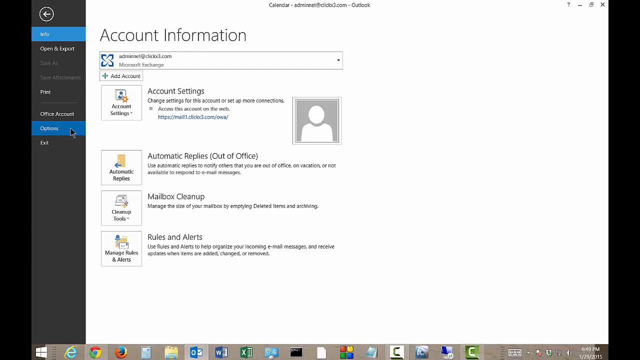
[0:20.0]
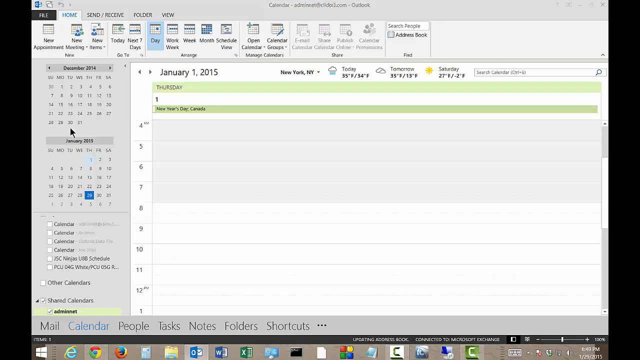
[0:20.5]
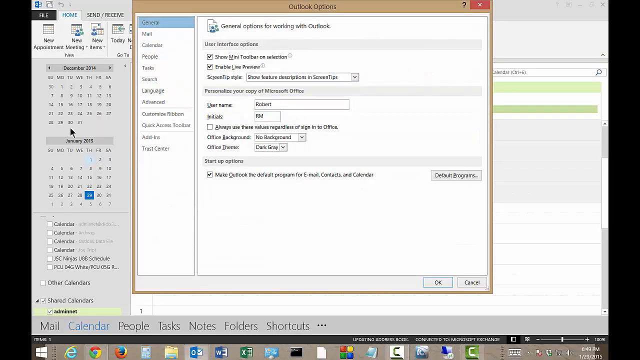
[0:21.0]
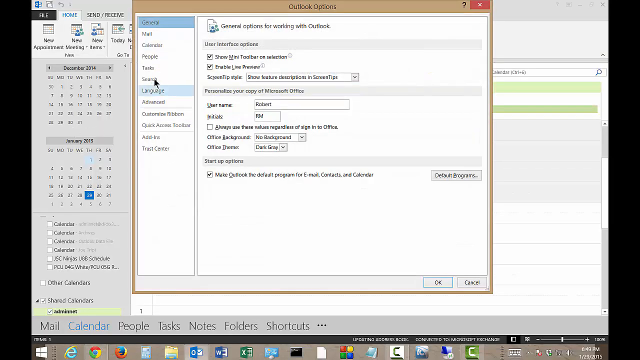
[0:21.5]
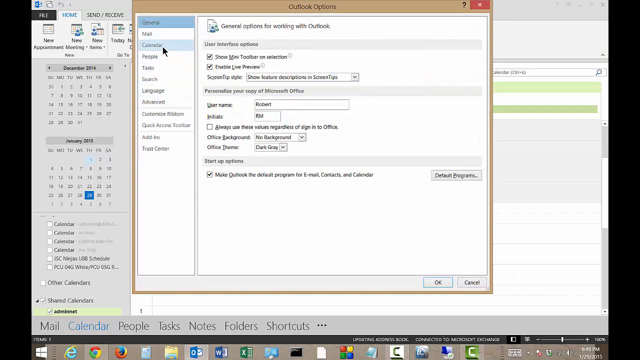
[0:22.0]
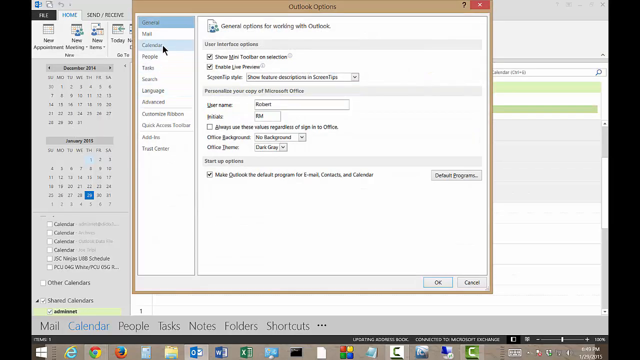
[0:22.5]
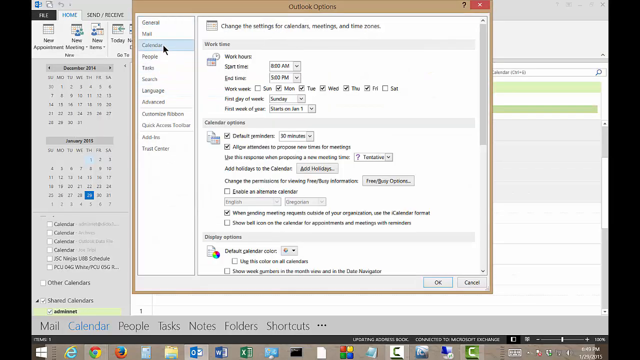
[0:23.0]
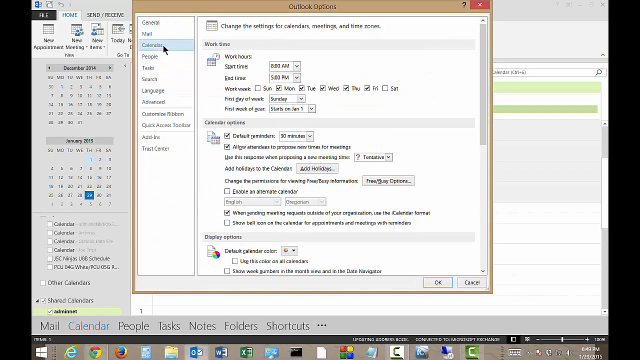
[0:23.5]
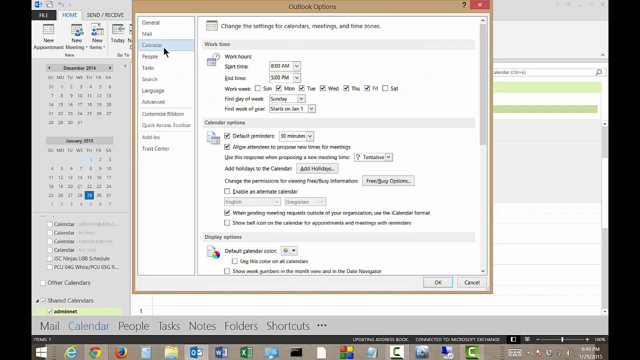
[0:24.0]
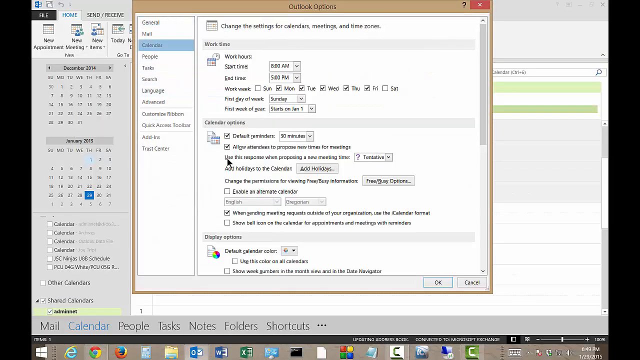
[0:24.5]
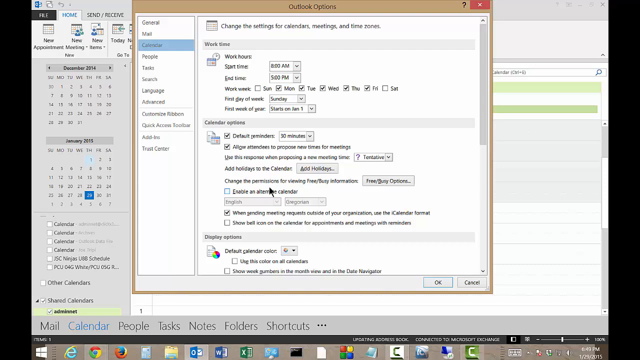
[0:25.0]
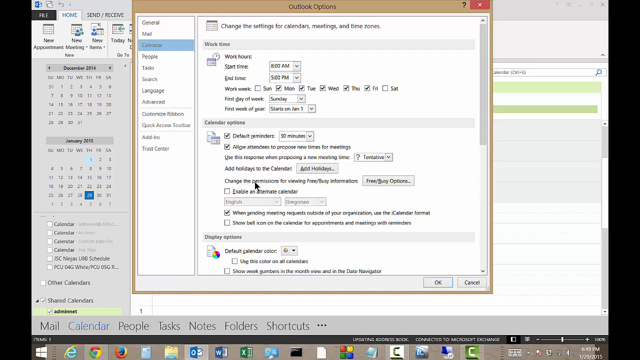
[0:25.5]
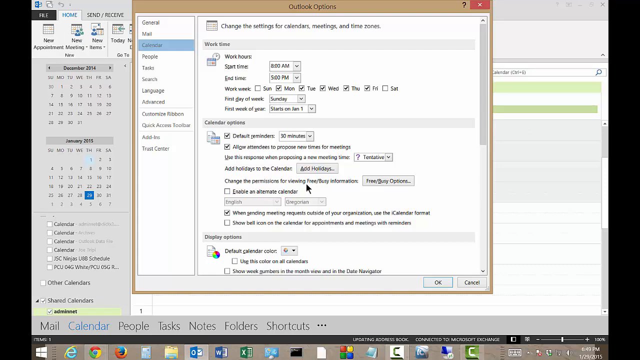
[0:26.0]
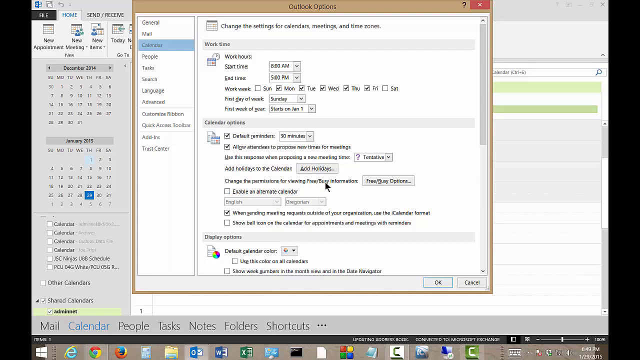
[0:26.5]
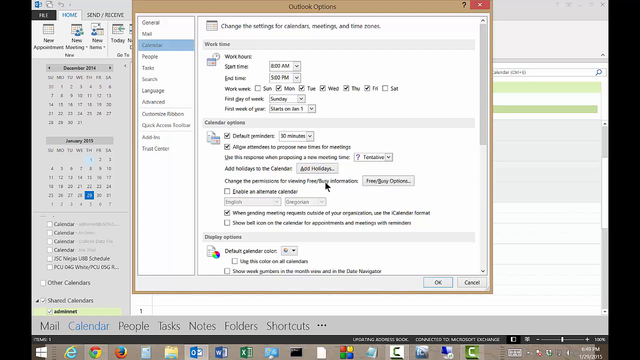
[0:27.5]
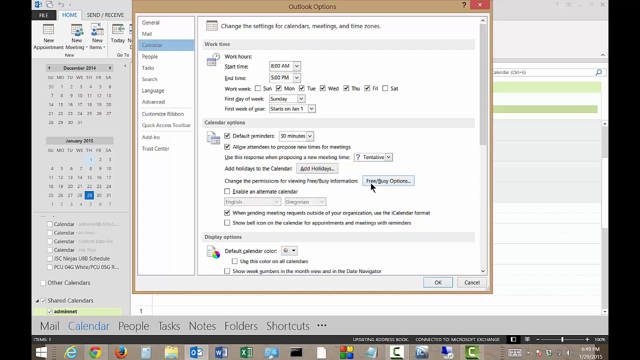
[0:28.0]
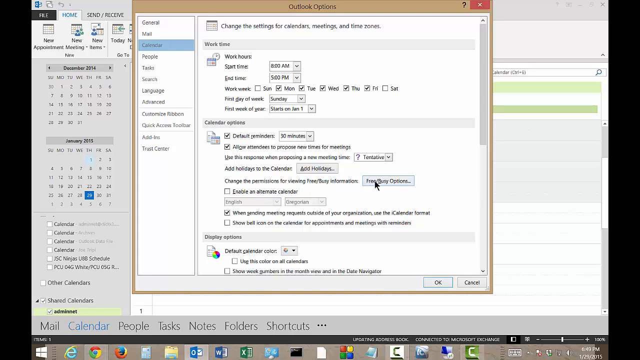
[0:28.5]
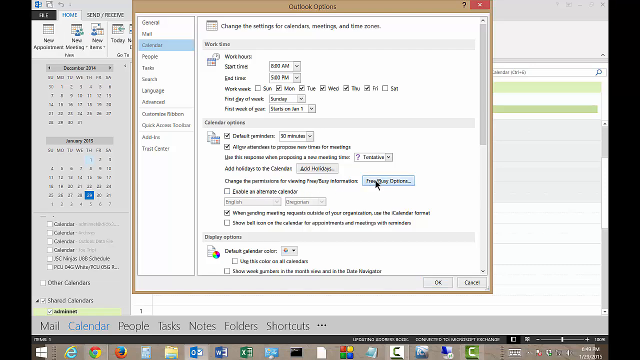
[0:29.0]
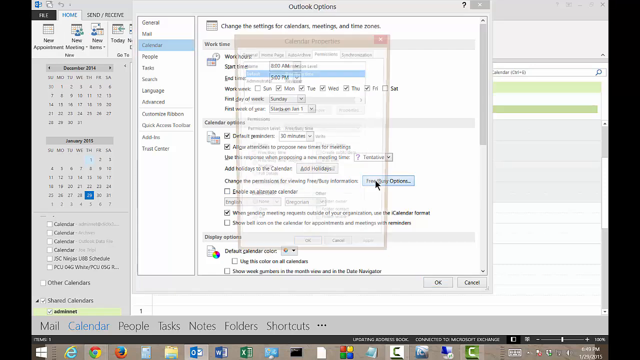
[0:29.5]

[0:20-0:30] After the selection from the file tab, another window opens, titled "Outlook". Down its left side are several options, including general, mail, calendar, people, tasks, search, customized ribbon, quick access toolbar, add-ons and trust center. The user selects calendar and goes directly to a button reading "change permissions for viewing"; the rest of the screen is not visible due to pixelation and lack of focus. Clicking it brings up another window.